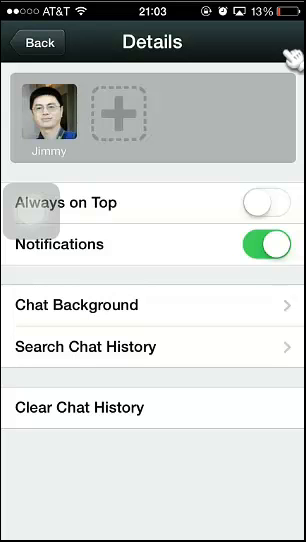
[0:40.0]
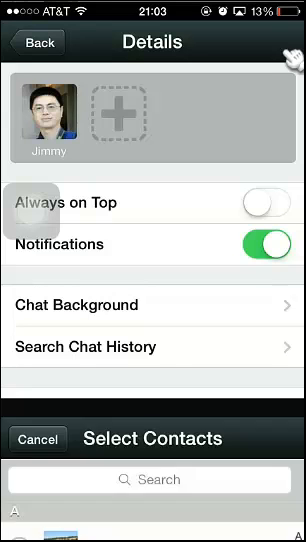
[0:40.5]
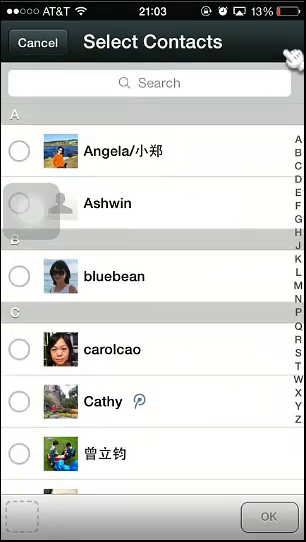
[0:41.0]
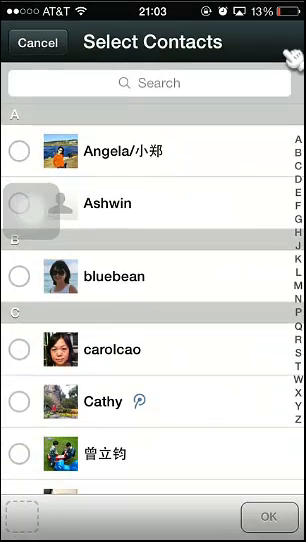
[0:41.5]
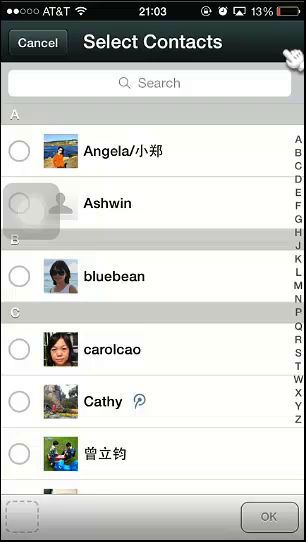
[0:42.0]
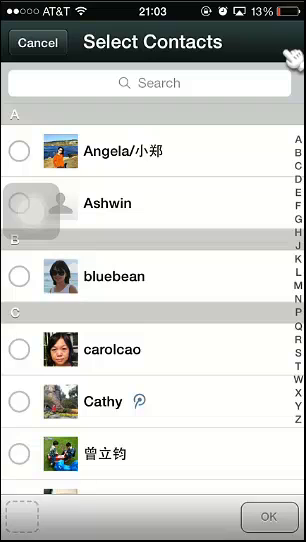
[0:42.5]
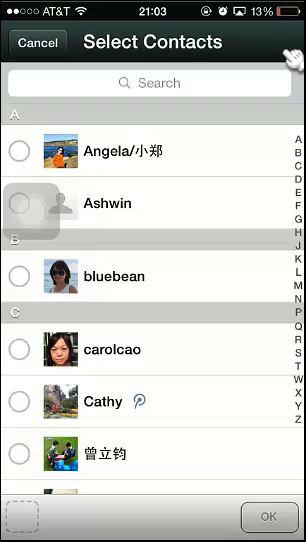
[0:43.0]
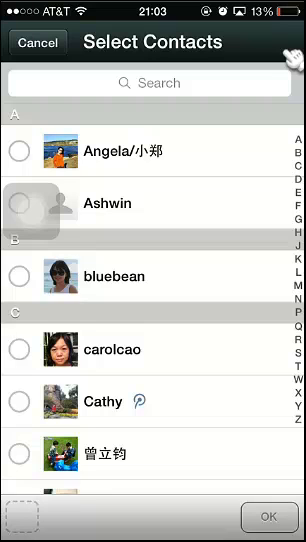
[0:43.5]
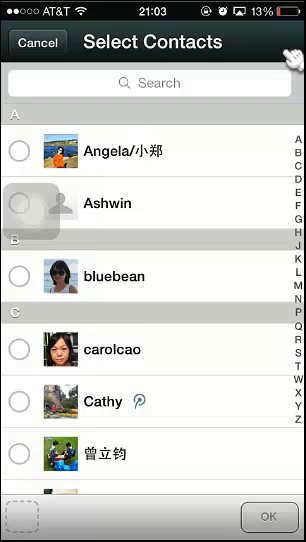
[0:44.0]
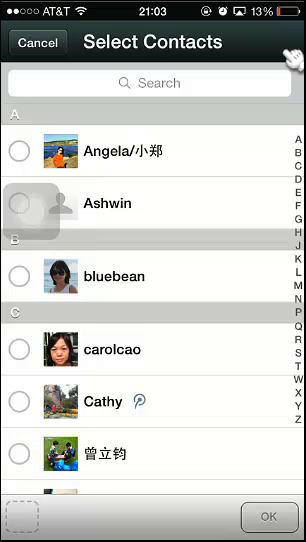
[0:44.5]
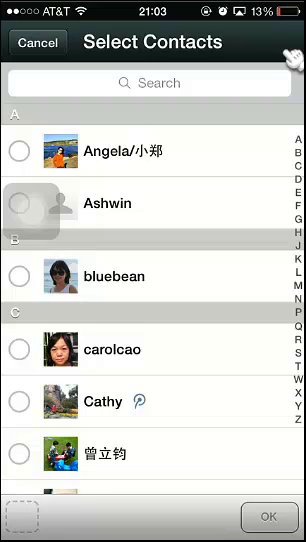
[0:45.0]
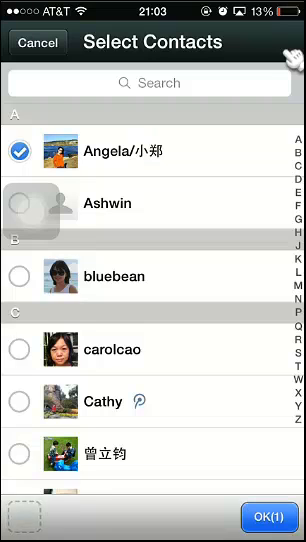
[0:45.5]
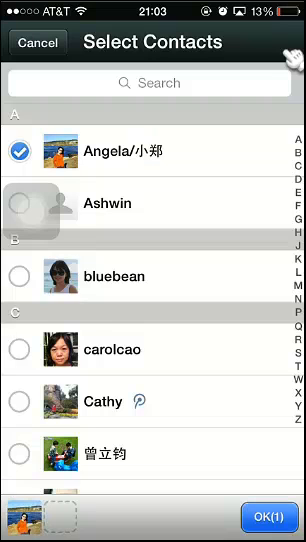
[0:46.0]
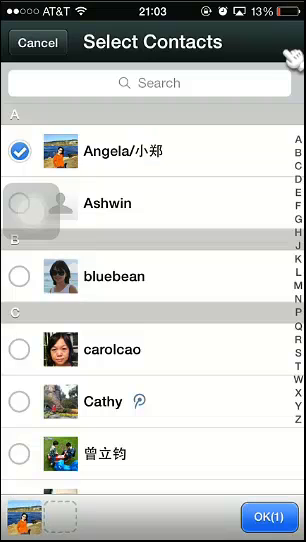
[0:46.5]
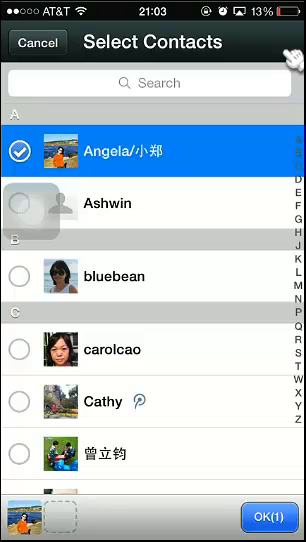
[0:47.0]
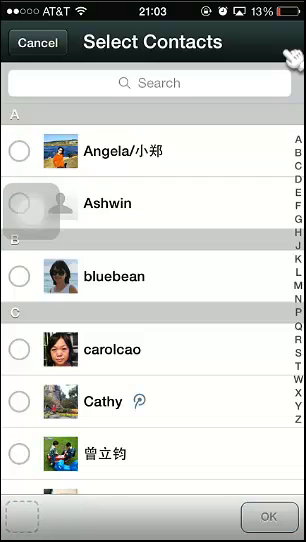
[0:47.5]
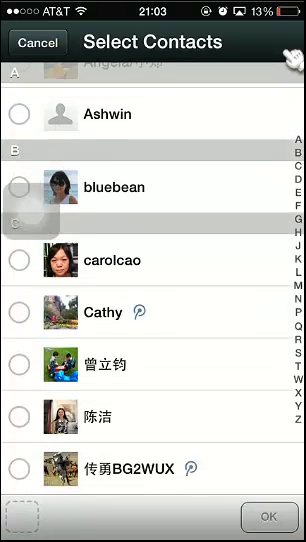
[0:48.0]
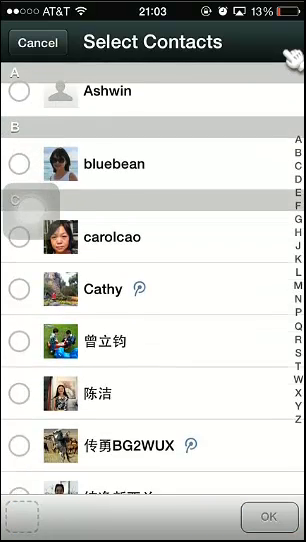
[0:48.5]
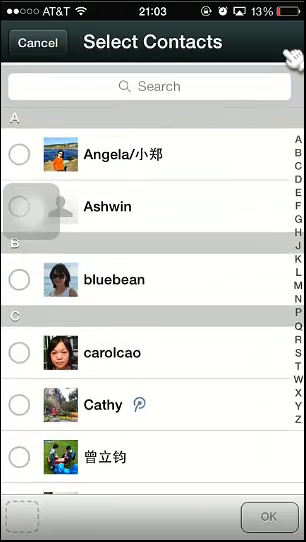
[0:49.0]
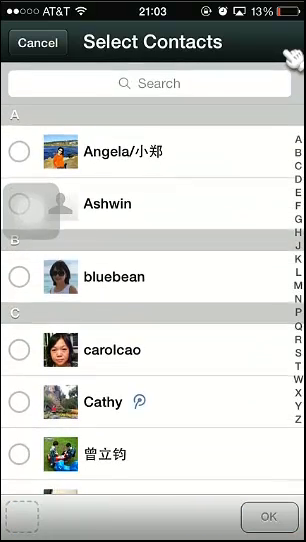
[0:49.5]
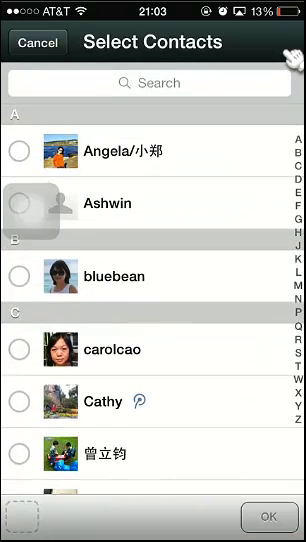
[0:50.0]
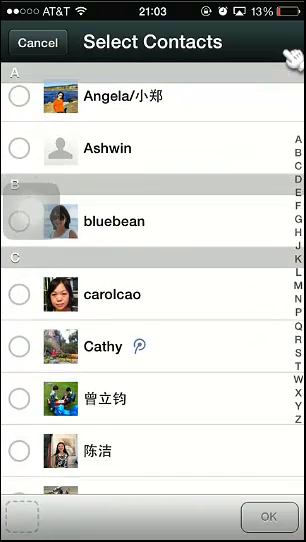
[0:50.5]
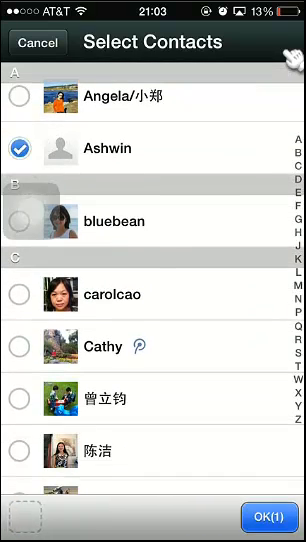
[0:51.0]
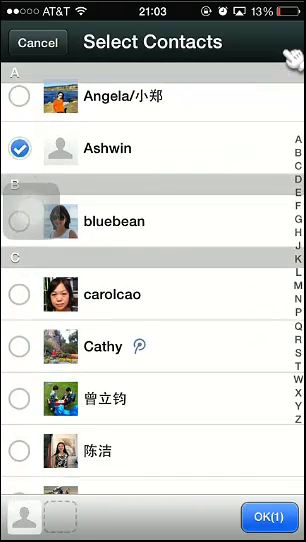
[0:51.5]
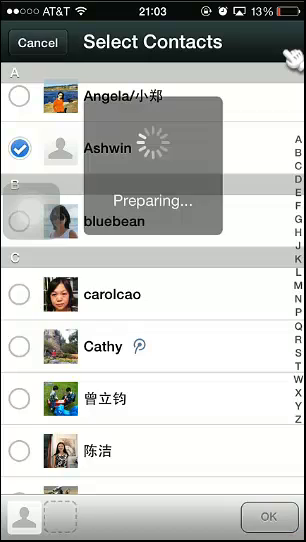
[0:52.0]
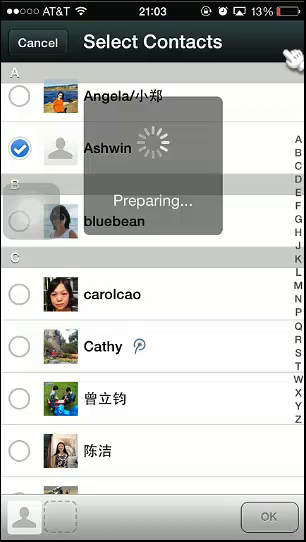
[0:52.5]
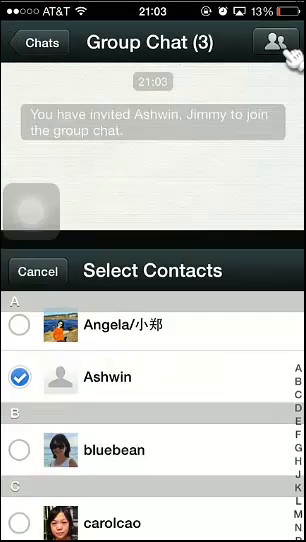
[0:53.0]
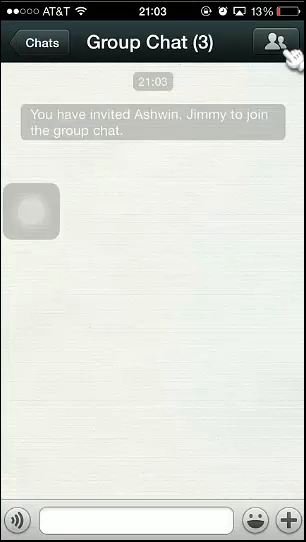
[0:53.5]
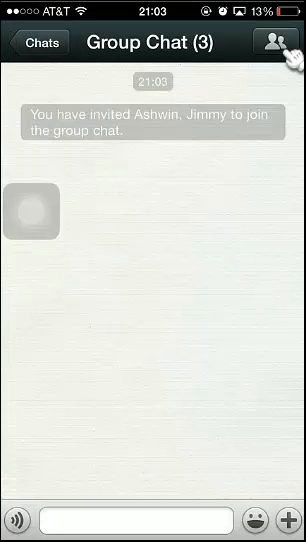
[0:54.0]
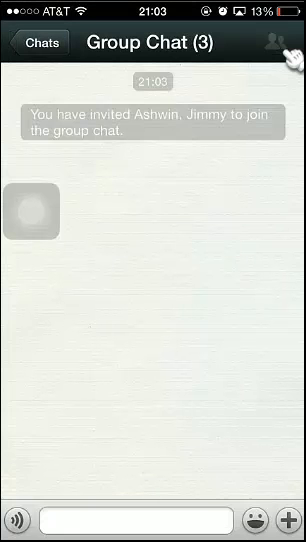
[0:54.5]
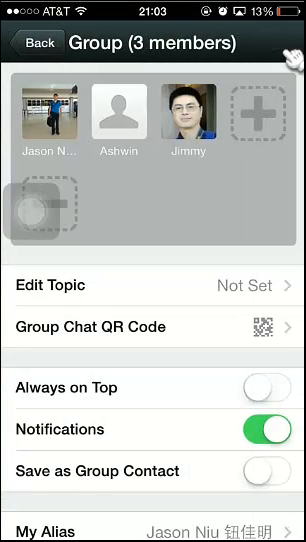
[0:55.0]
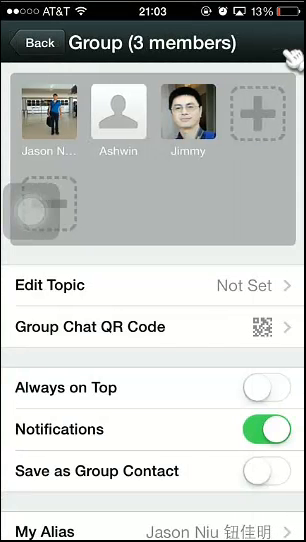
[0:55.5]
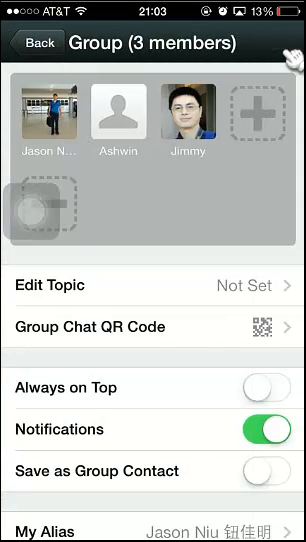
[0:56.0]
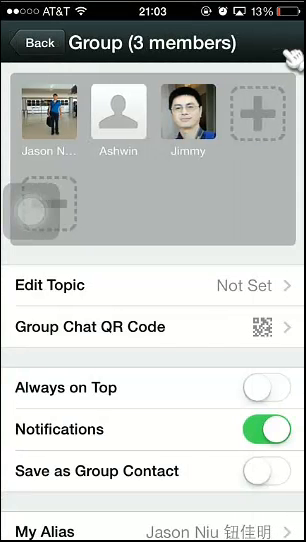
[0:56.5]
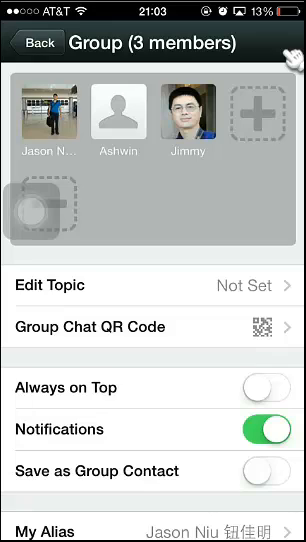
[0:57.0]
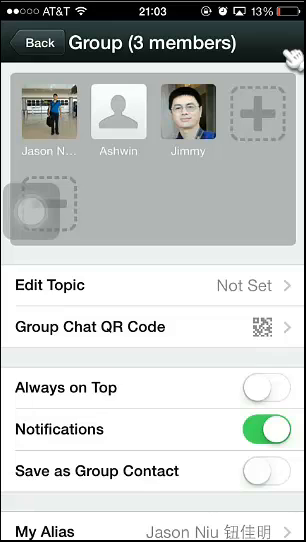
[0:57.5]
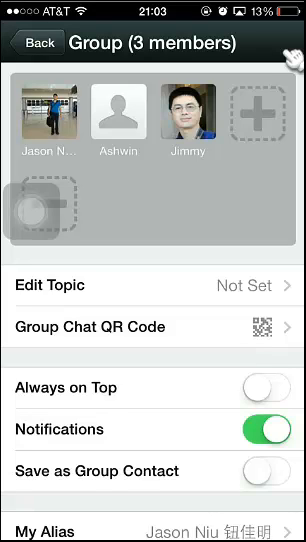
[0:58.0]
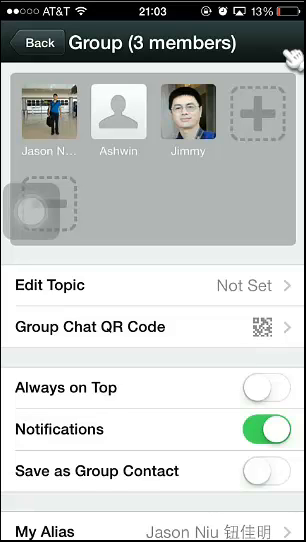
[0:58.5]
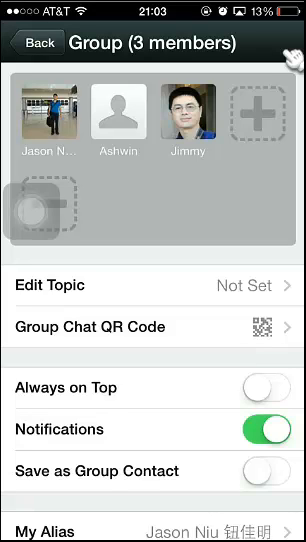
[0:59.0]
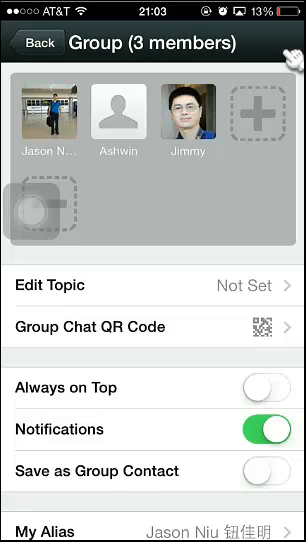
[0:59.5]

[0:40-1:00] The user scrolls to add a group, and the group is with Ashwin. A text says "you are invited to a group with Ashwin and Jamie". The user then taps the menu, which reveals the participants: Jason, Ashwin and Jimmy, so the group has three members. The user's name is Jason, and "My alias" shows Jason Nui. At the bottom are an edit topic option, which is not set, a group chat QR code, always on top, notification, and save as group contact. Ashwin has no profile picture. Jason's profile picture shows a person in a train station wearing a blue T-shirt and black trousers, holding a black suitcase and facing the camera, with a train behind him.